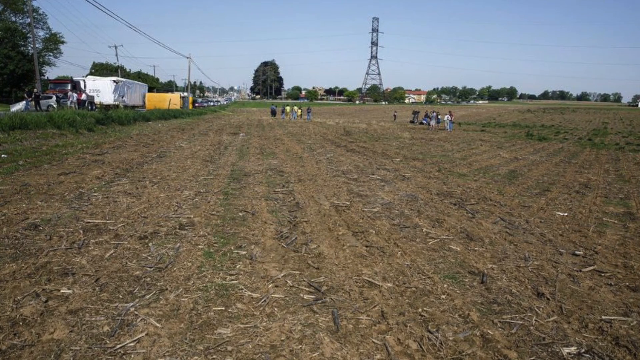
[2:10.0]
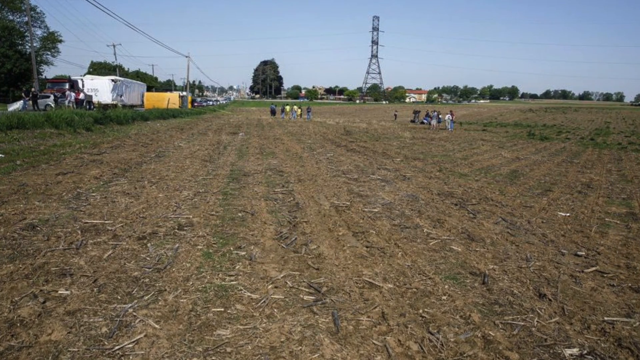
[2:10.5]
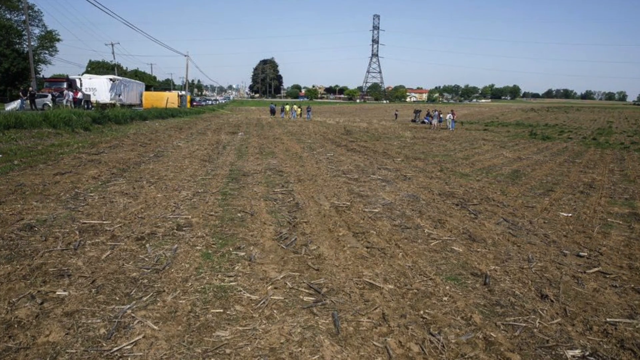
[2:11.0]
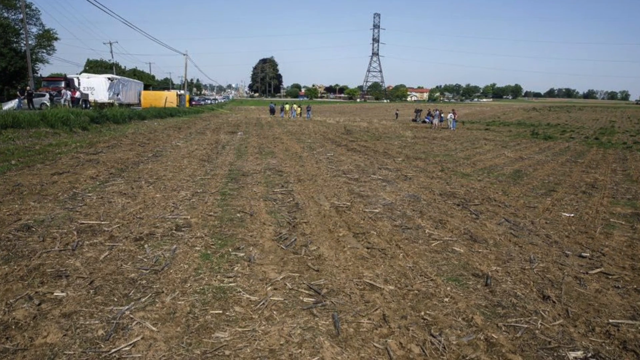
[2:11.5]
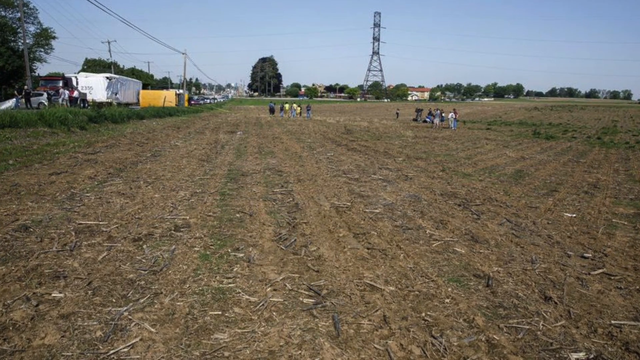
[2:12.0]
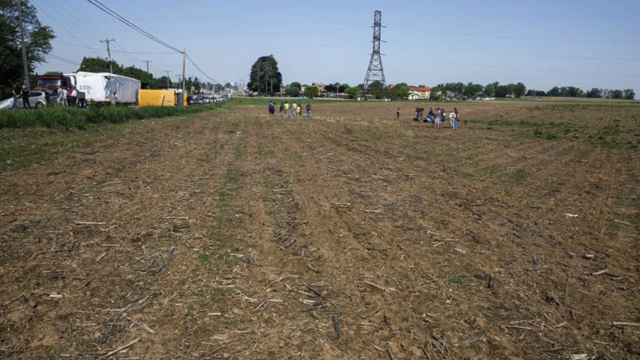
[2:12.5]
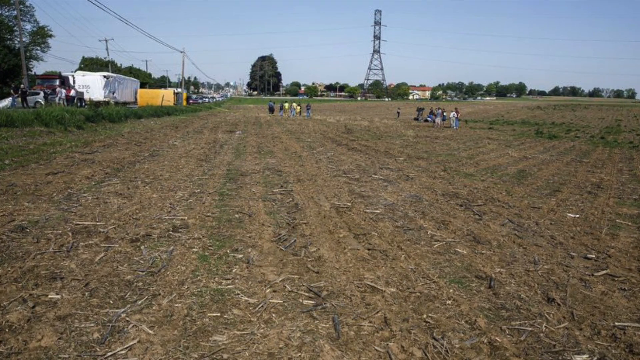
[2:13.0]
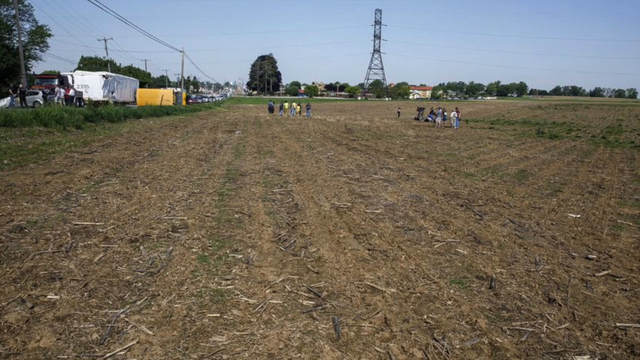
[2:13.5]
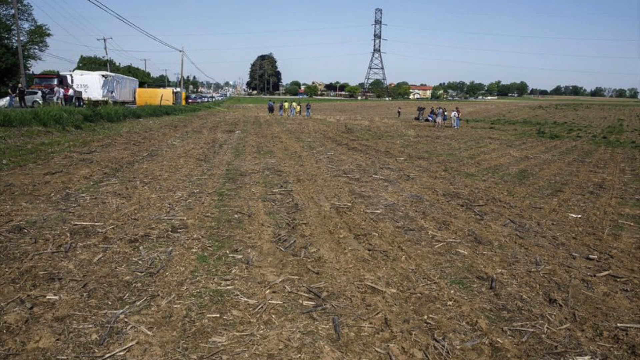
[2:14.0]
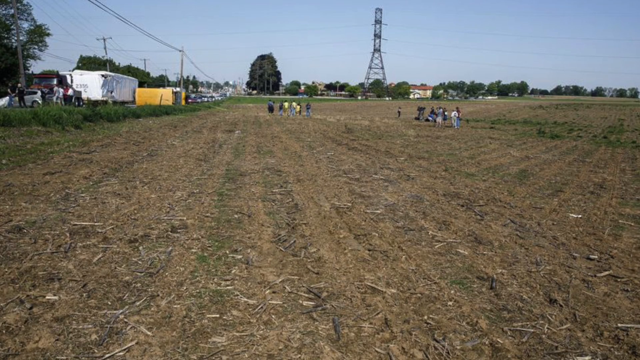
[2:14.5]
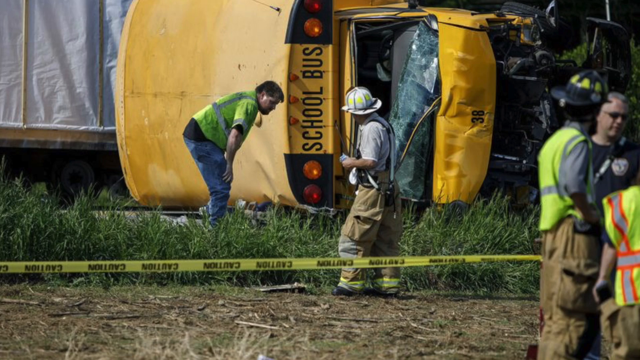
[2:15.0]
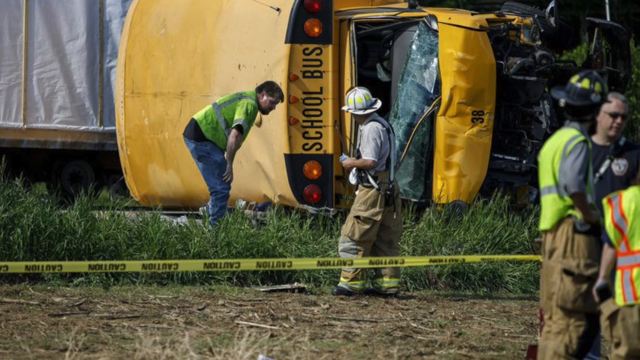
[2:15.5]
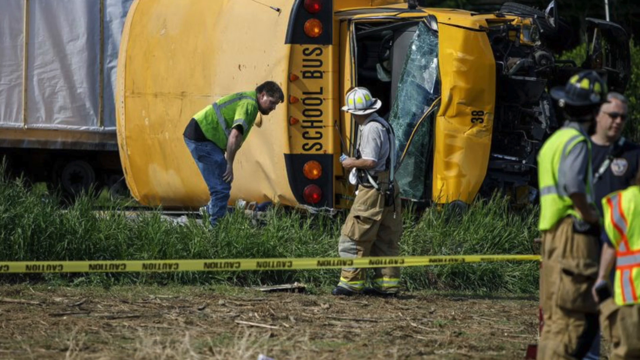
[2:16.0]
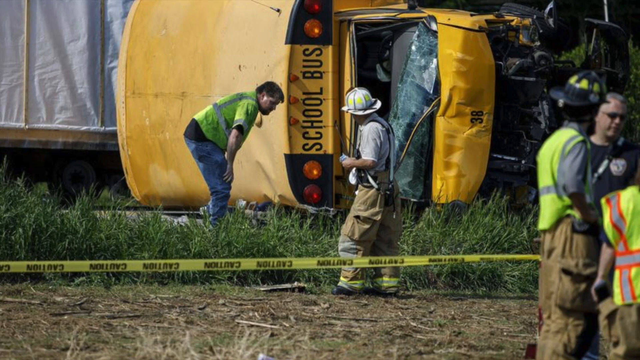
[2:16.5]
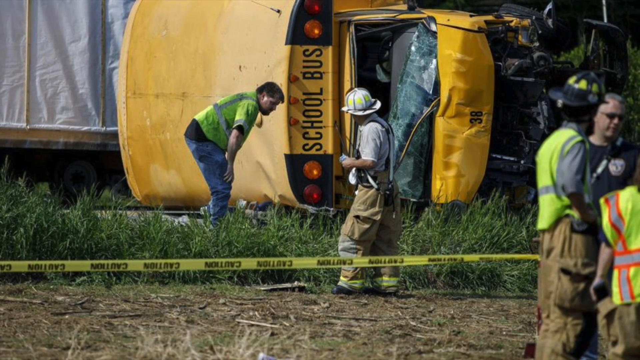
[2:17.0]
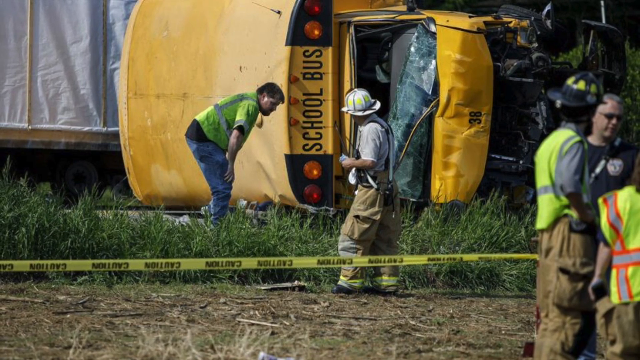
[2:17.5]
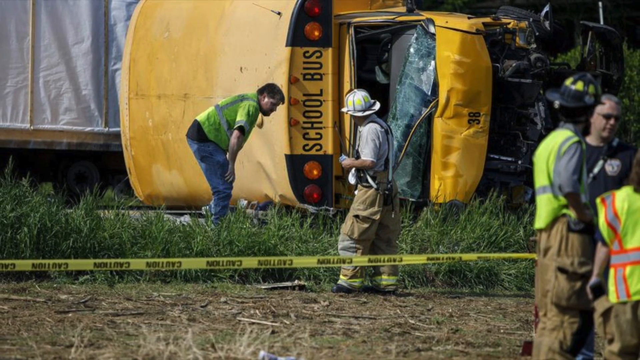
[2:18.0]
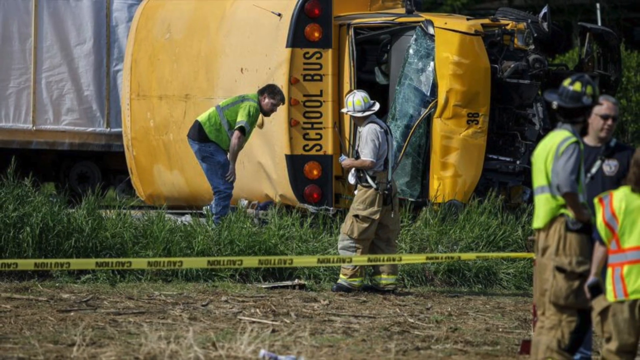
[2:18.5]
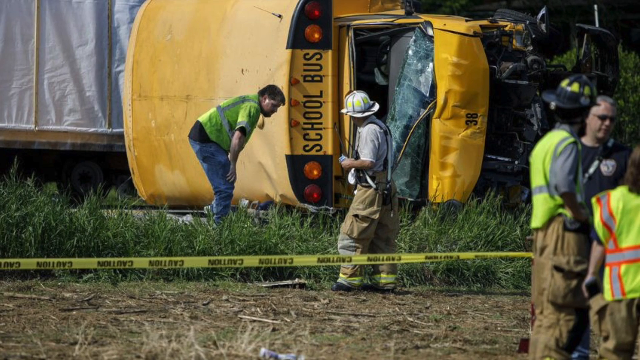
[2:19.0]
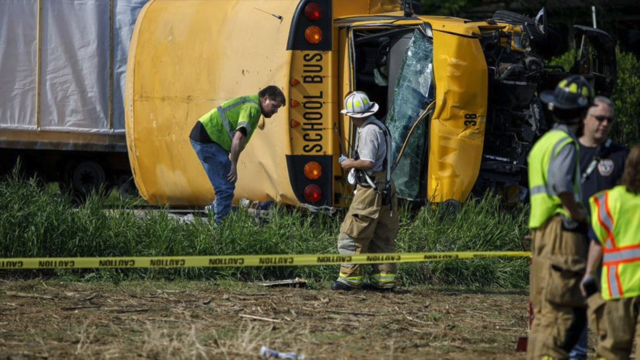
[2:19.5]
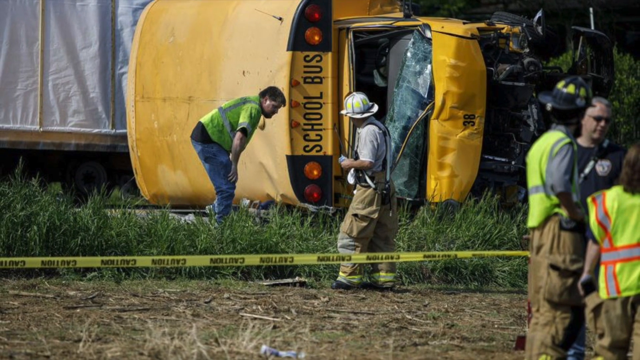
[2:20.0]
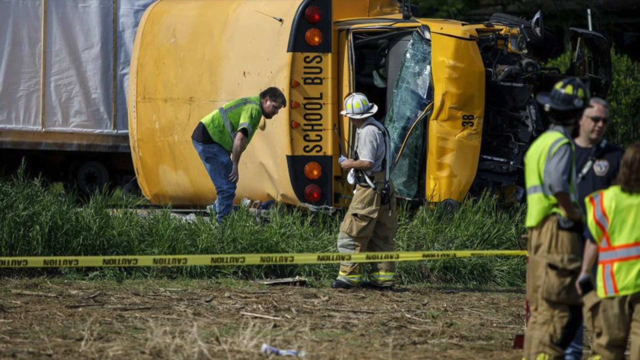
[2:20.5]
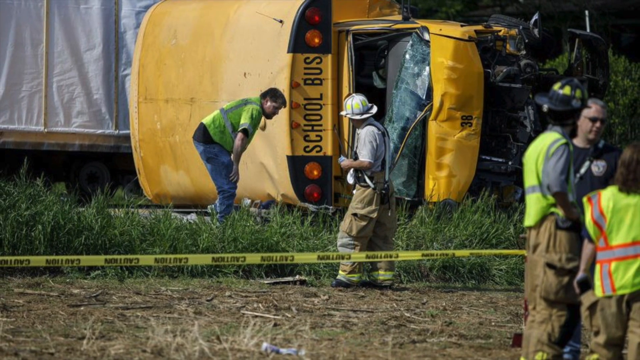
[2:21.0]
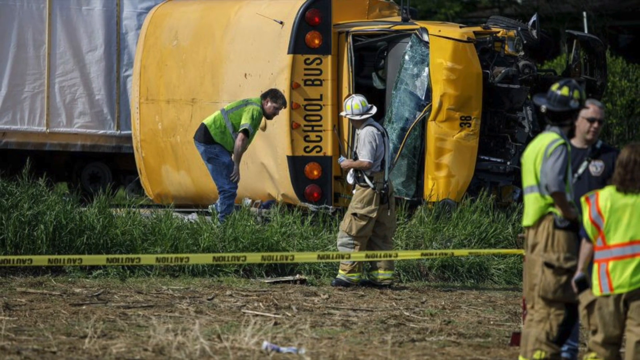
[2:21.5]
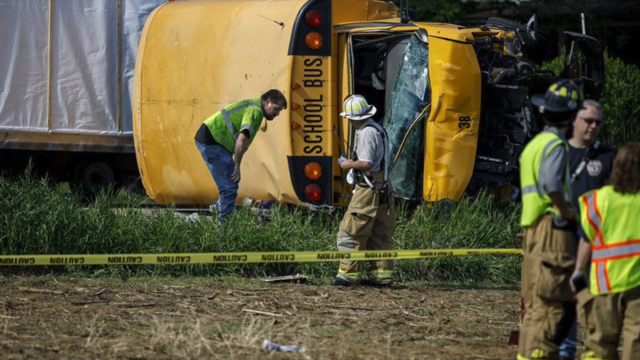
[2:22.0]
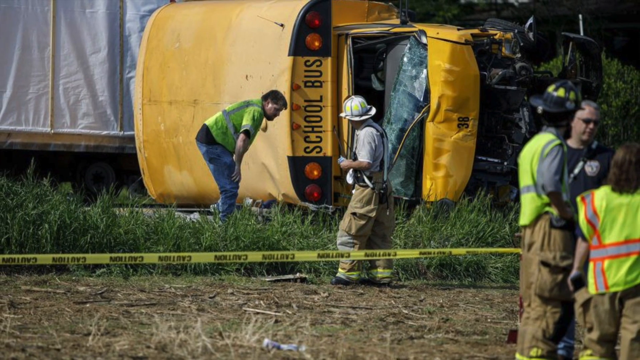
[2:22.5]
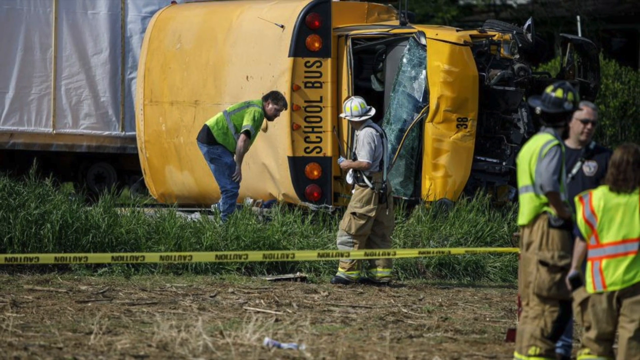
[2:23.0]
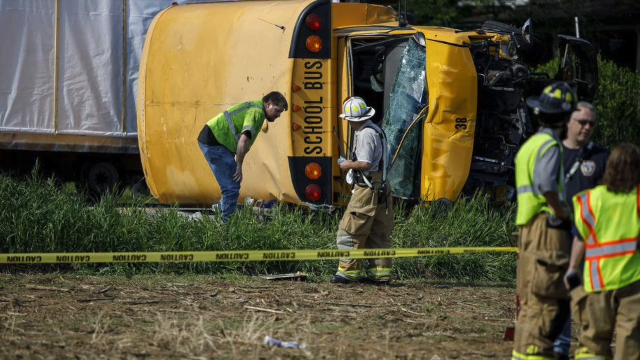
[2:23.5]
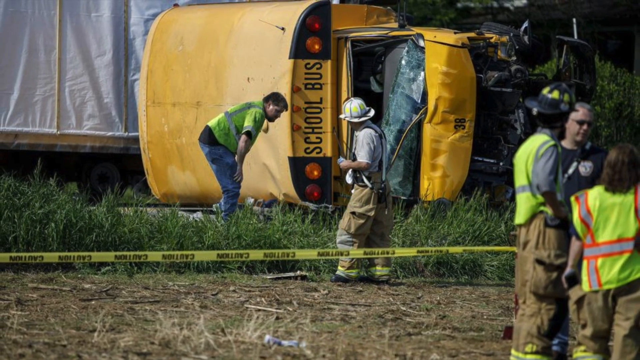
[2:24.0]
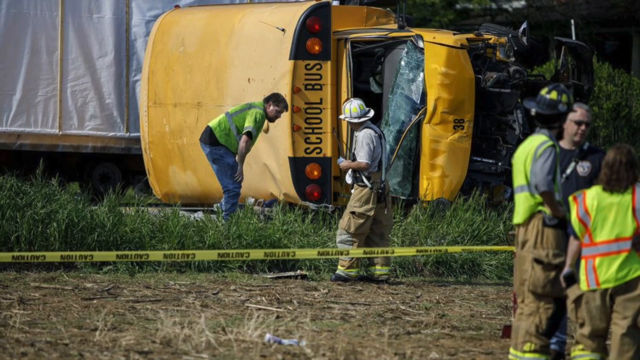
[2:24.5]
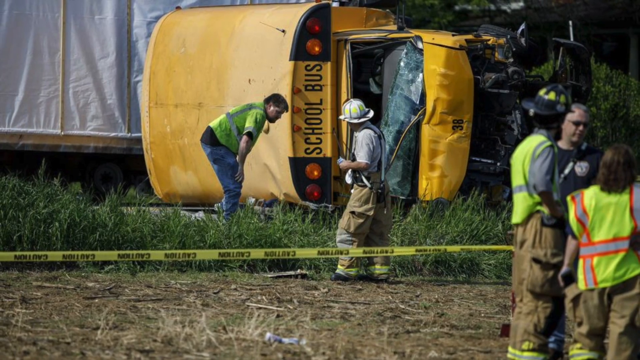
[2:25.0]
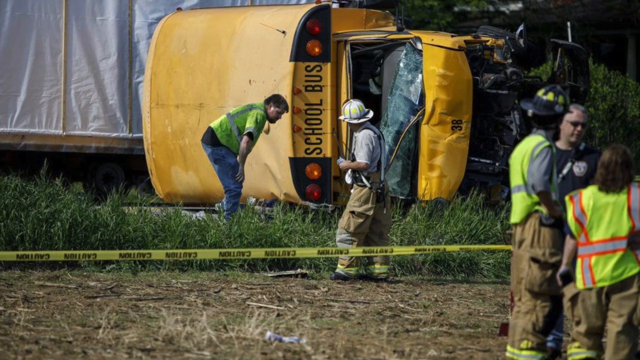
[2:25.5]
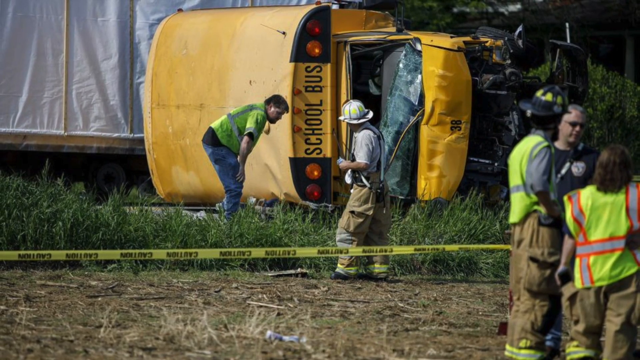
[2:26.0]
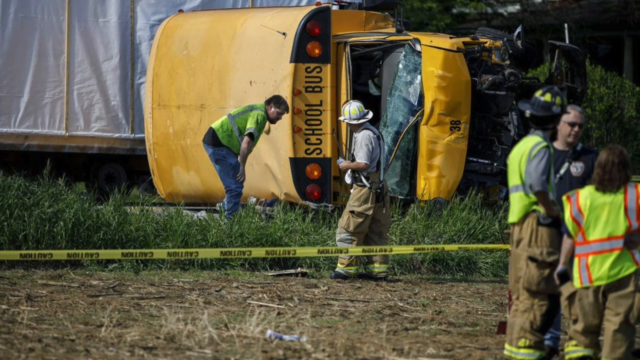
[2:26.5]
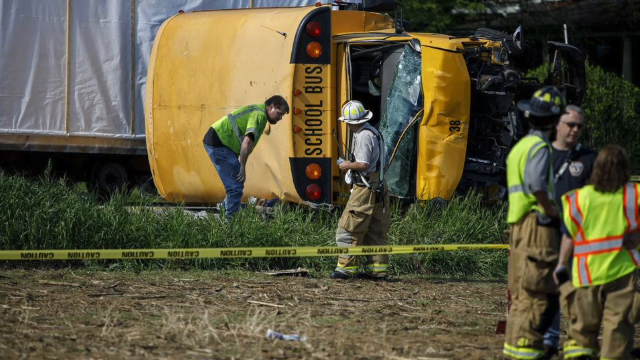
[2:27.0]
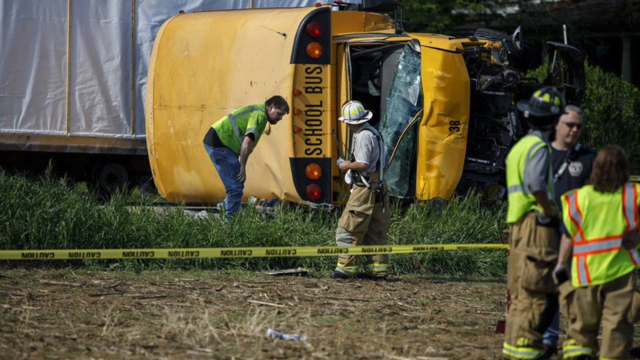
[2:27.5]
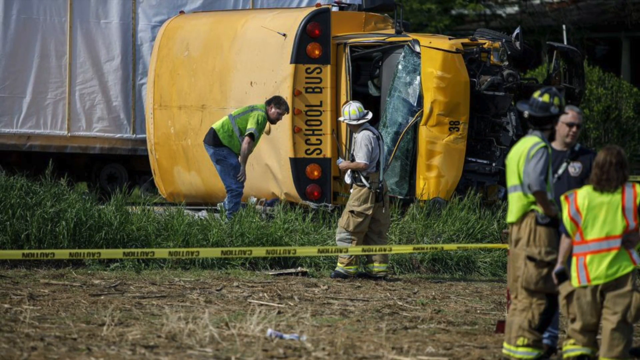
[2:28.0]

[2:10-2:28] A distant shot shows the whole scene: the overturned yellow school bus on the left, the two groups of people in the mowed field looking at the accident, and a large power tower in the background. Some people are taking pictures and others are working. The view shifts to a close-up of the school bus, where "police line do not cross" tape is clearly visible. One man in a yellow vest and jeans is kind of bending over with his hands on his knees, looking at something. Another, dressed more like a fireman in a white hard metal hat, fireman suspenders, fireman pants and a gray T-shirt, walks by looking at it. In the far right-hand corner is a group of people: one in a blue shirt with a fire department logo and two in high-vis gear, like construction workers or tow truck operators. The group on the right is outside the police line, while the two men are inside the police tape line.